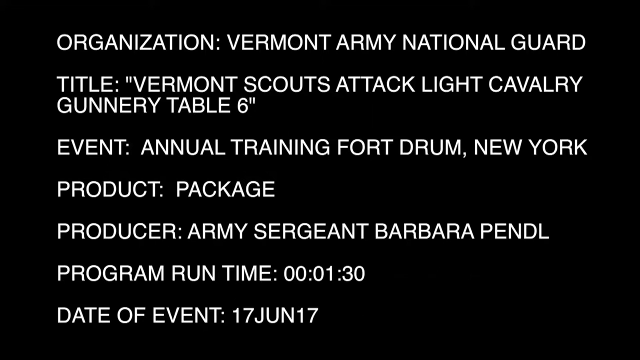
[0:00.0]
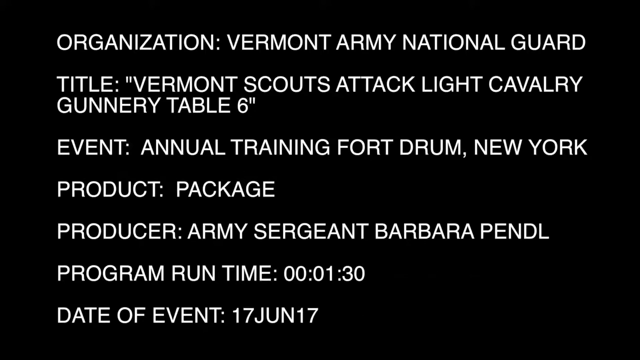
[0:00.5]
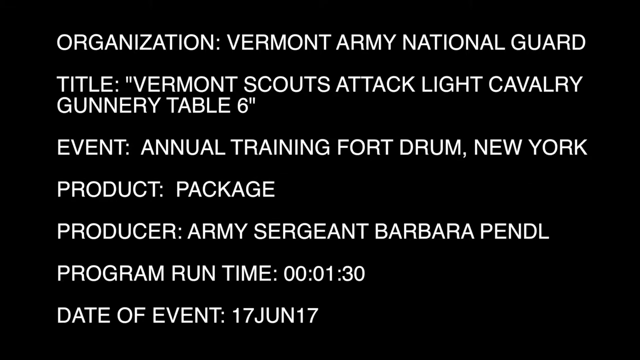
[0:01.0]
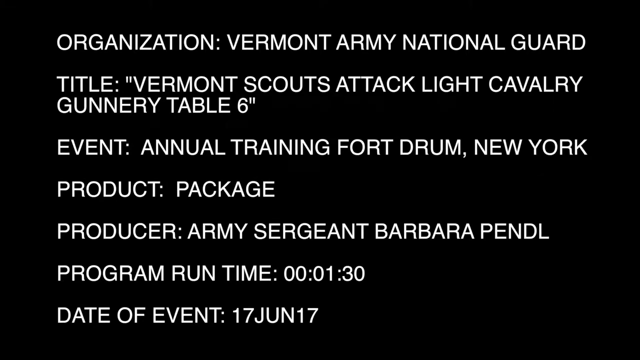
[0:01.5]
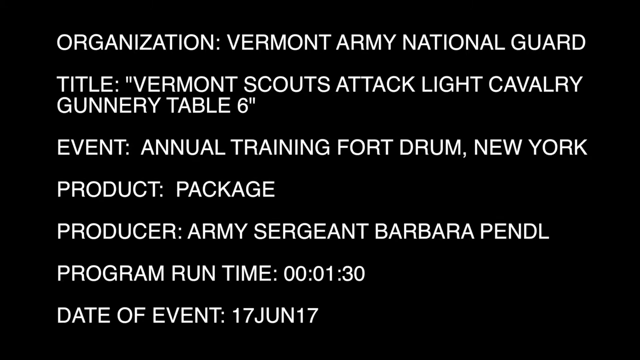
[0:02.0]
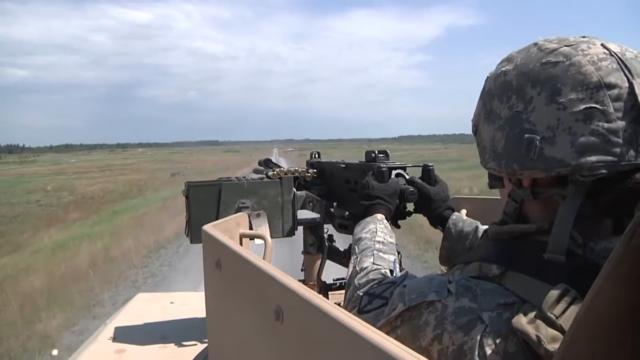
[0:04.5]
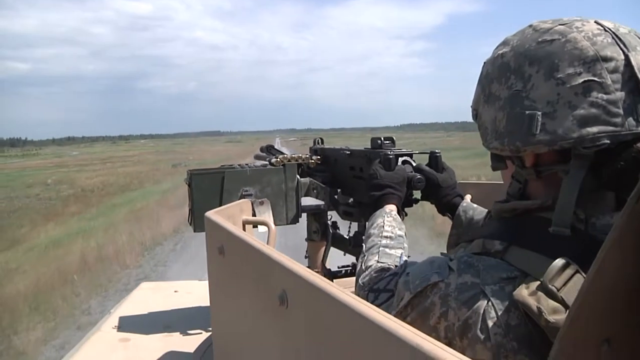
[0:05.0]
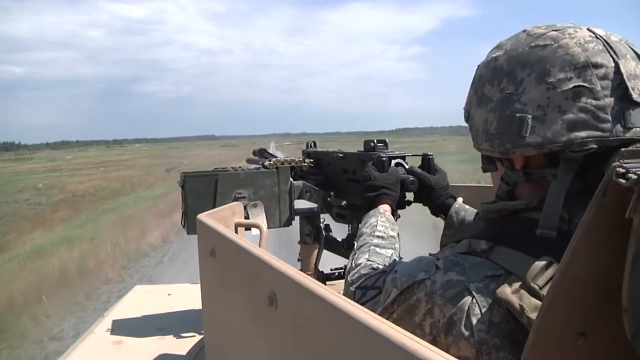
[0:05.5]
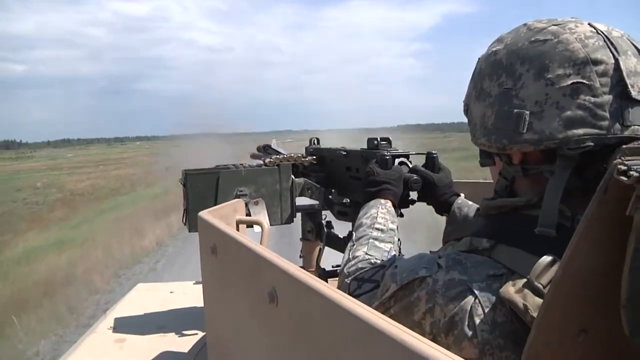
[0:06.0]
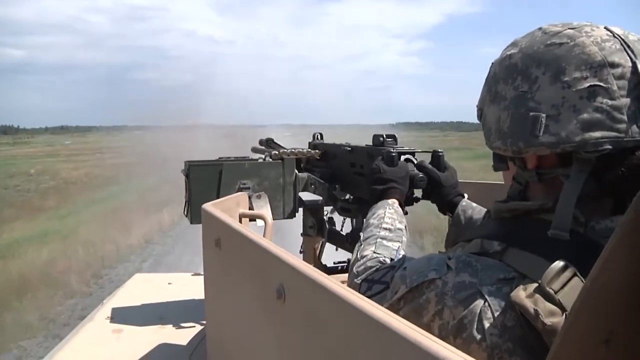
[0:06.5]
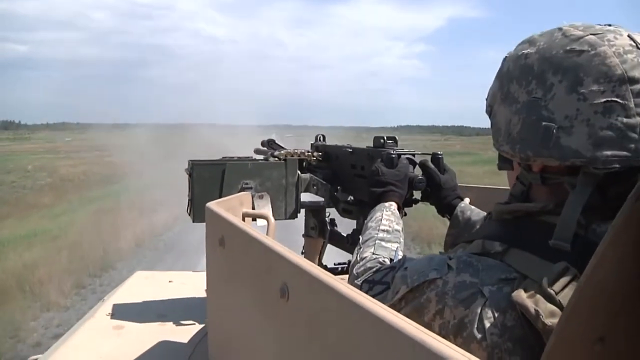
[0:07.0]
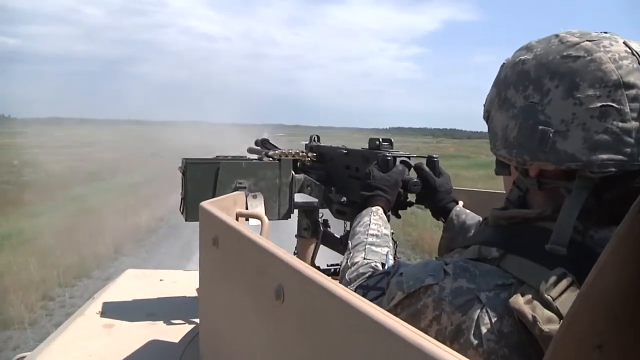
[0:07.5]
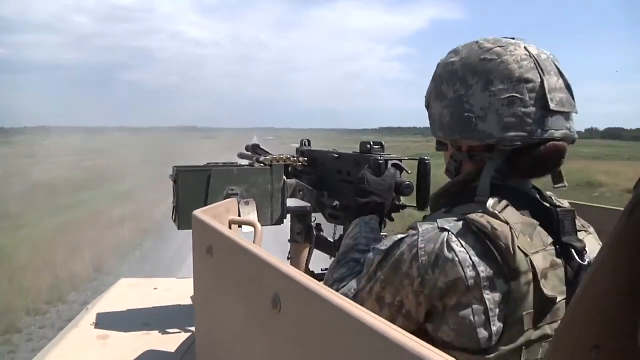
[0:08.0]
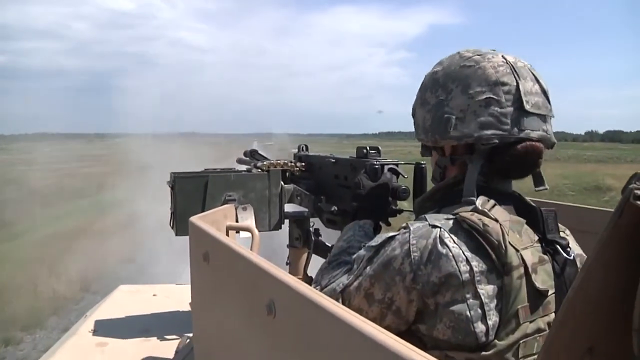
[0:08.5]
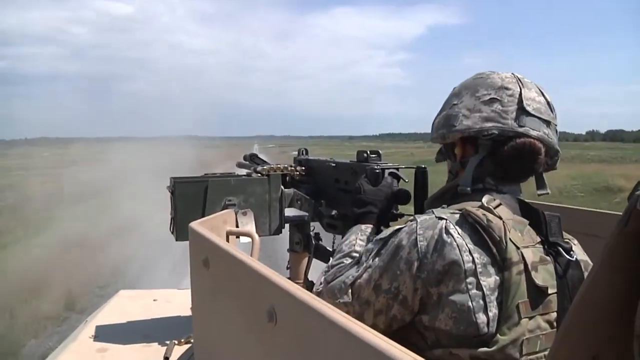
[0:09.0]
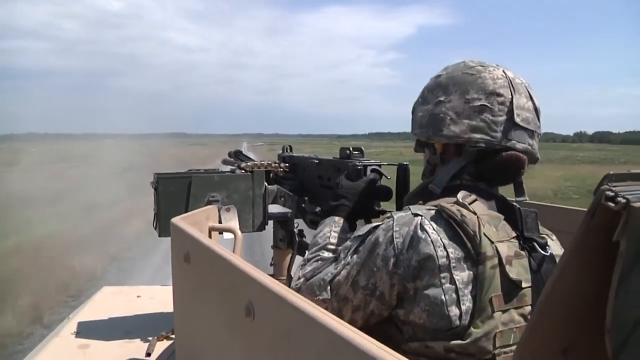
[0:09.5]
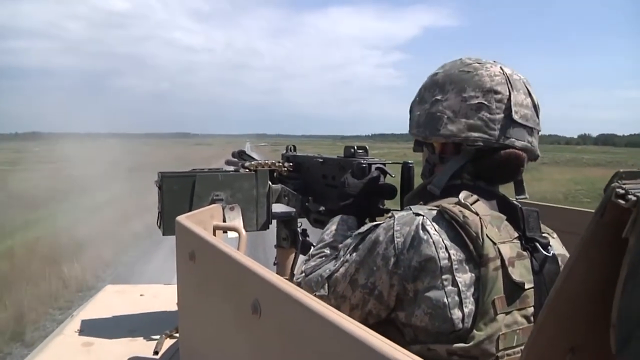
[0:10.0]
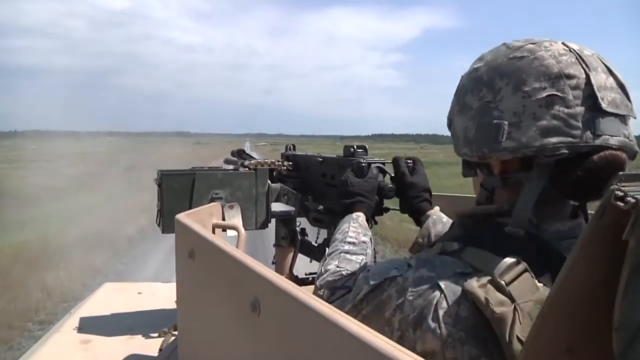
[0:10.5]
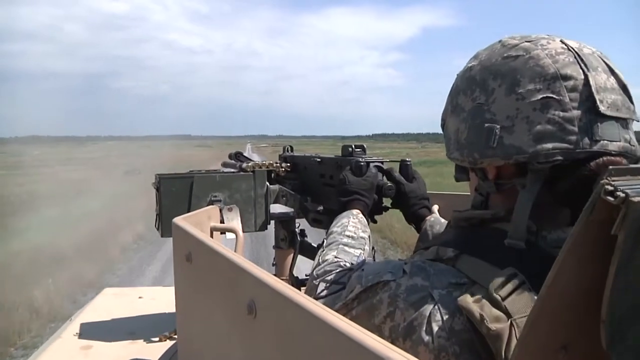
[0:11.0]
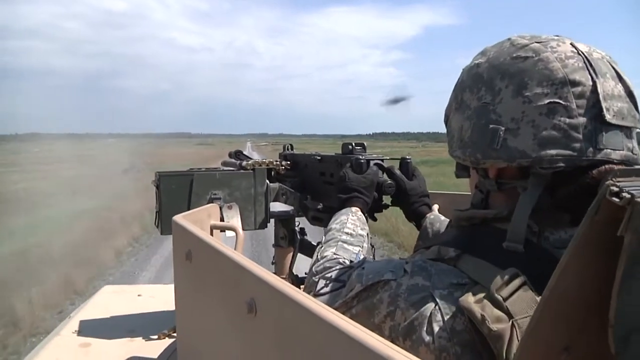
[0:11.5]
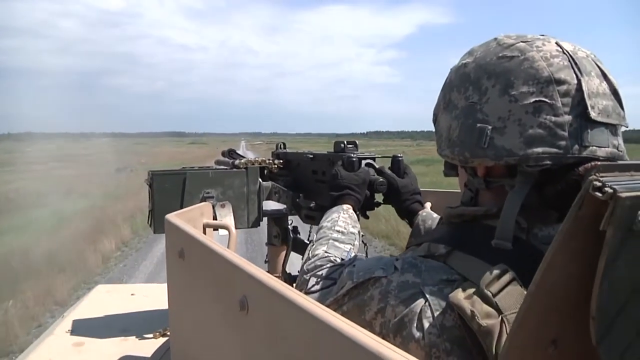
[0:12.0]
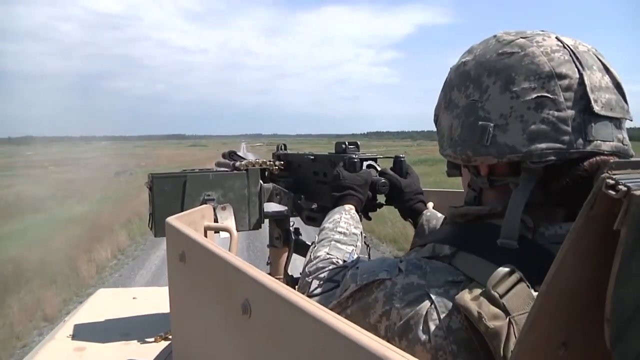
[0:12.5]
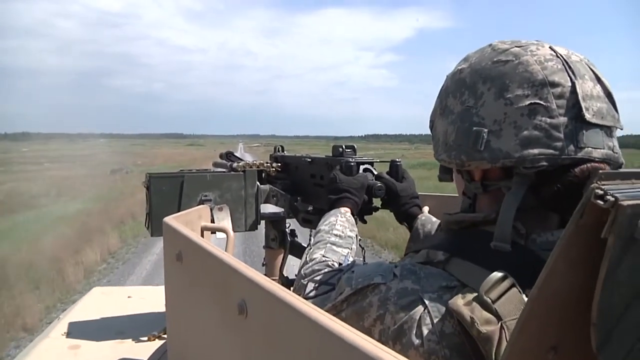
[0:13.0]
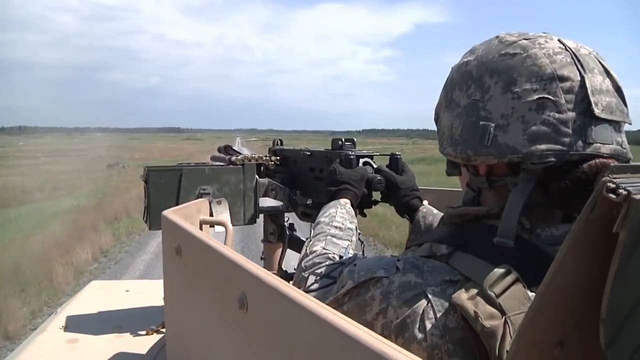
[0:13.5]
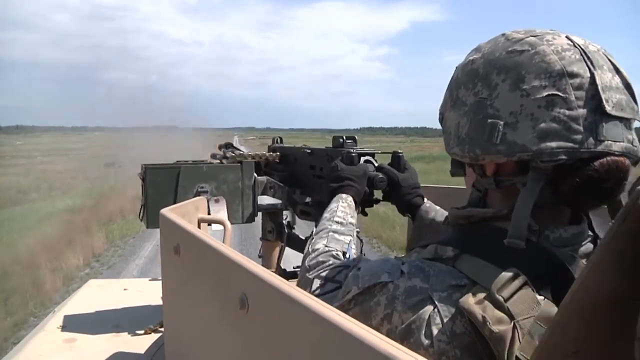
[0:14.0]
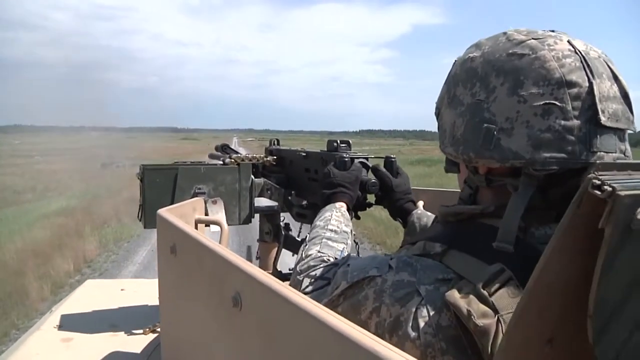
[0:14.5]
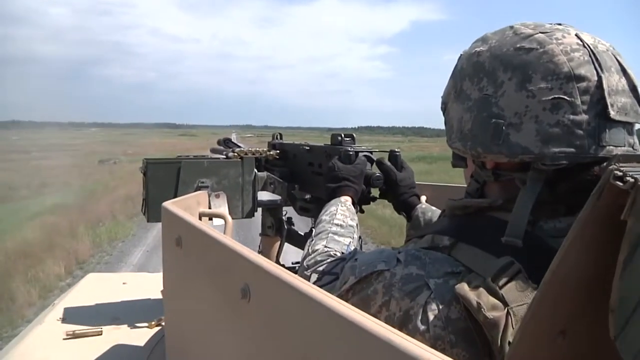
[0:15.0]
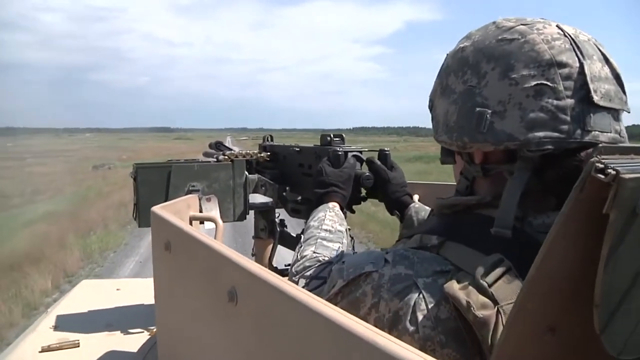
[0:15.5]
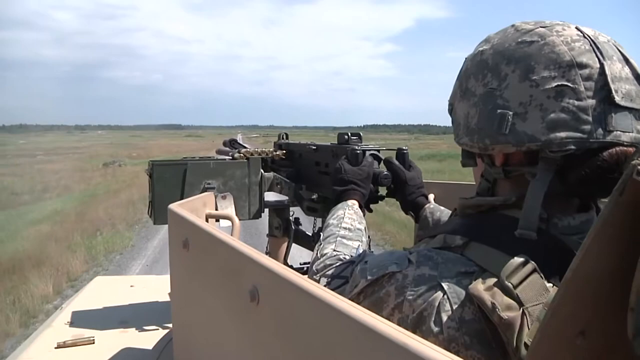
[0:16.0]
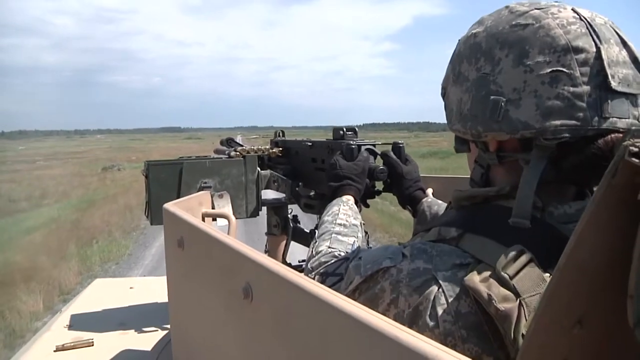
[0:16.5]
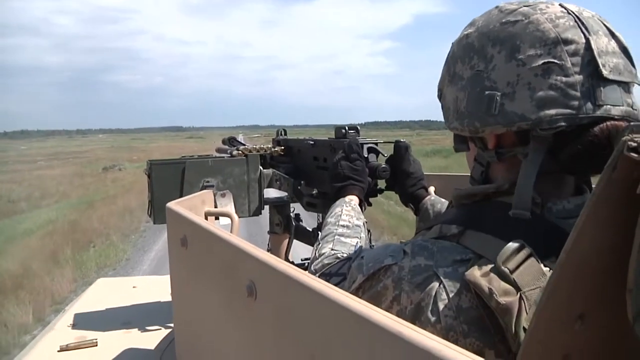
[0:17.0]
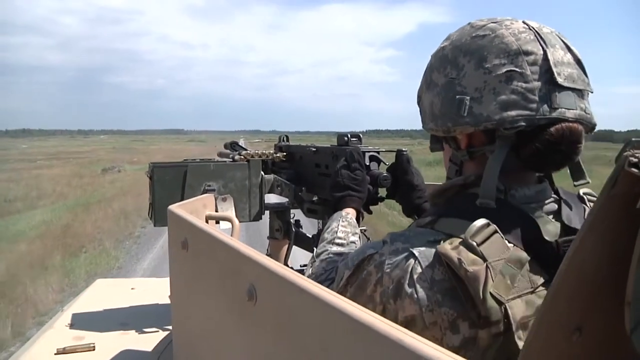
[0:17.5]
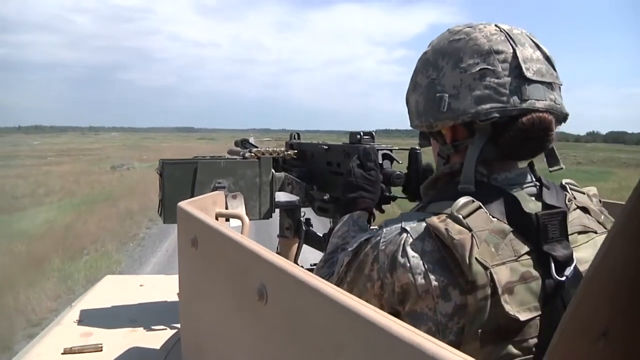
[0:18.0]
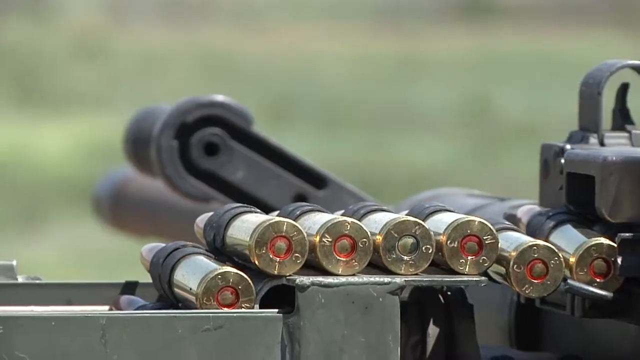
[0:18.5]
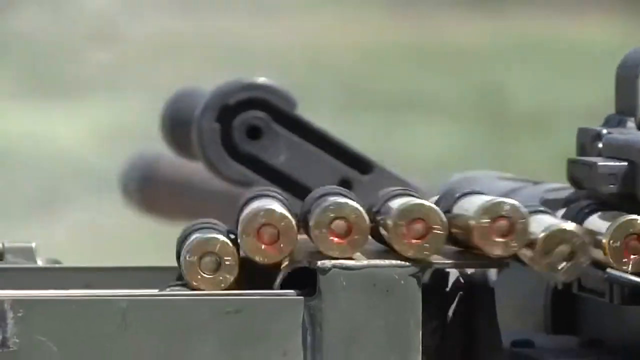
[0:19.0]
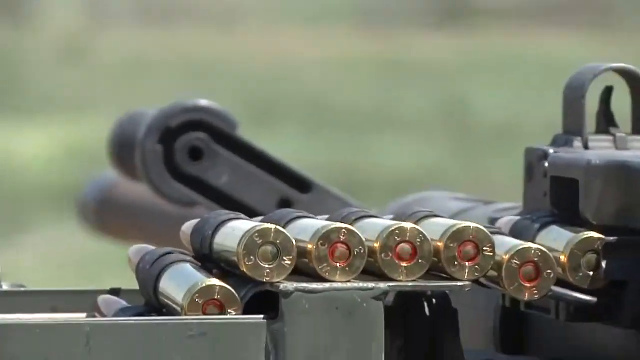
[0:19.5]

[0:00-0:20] Text on the screen reads "organization Vermont Army National Guard," with the title "Vermont Scouts Attack Light Cavalry Gunnery Table 6," followed by "event annual training Fort Drum, New York," "product package producer Army Sergeant Barbara Pendle" and "program runtime one minute 30 seconds." The screen goes blank, and then a military setting appears: a soldier is sitting on a tank-like army vehicle with a machine gun on top of it, with only his head and a bit of his shoulders sticking out. He wears protective gear and a helmet. He starts firing the machine gun into an open space, with the camera sort of in his point of view. He fires a few rounds, stops, gets ready again and fires; he fires twice, stops again and adjusts. The camera moves closer to the gun as he shoots and the bullets keep reloading.